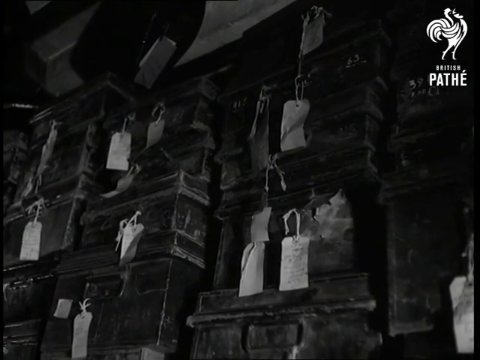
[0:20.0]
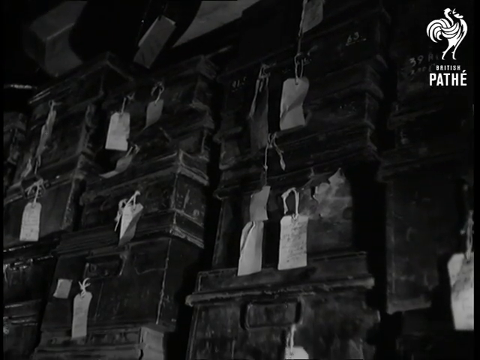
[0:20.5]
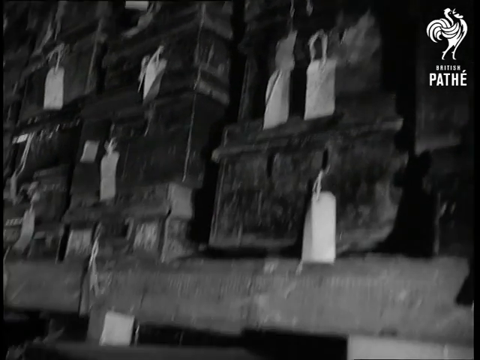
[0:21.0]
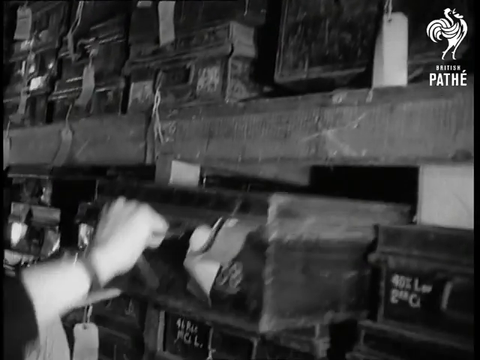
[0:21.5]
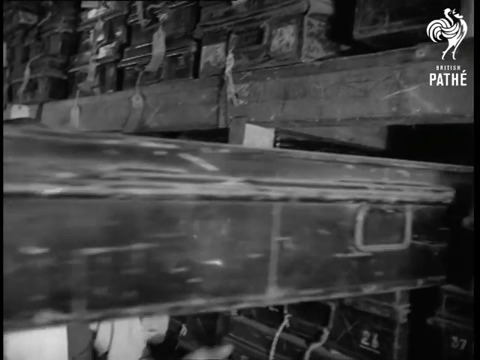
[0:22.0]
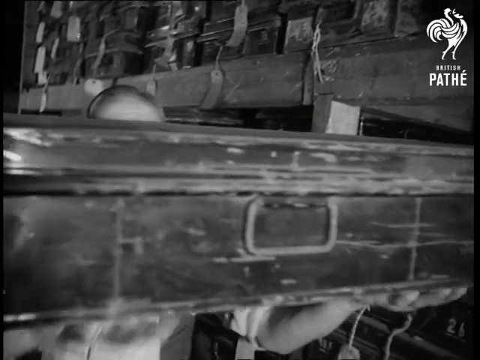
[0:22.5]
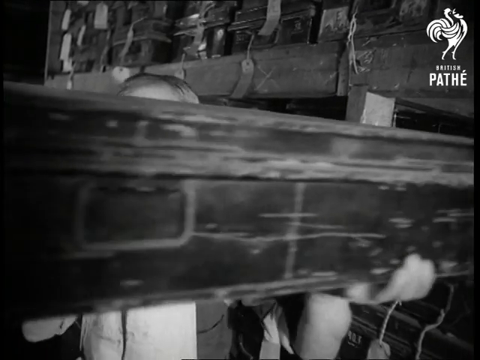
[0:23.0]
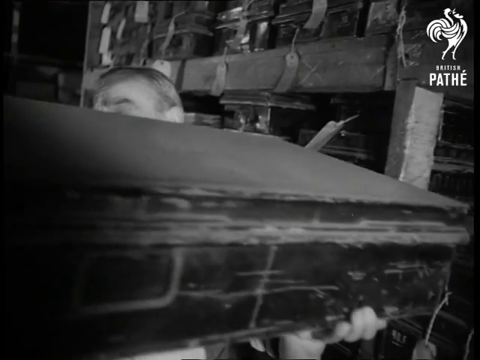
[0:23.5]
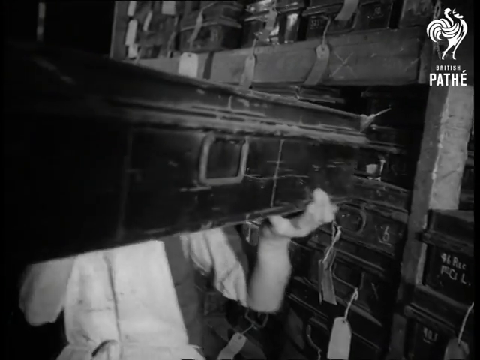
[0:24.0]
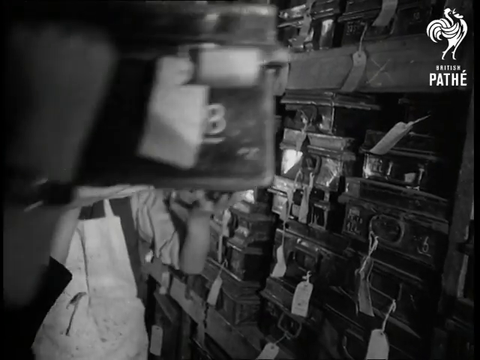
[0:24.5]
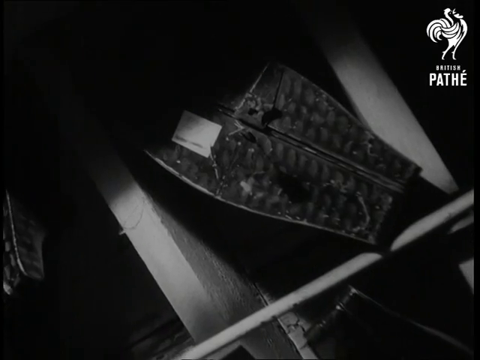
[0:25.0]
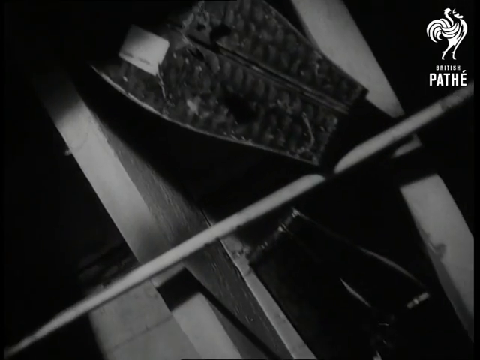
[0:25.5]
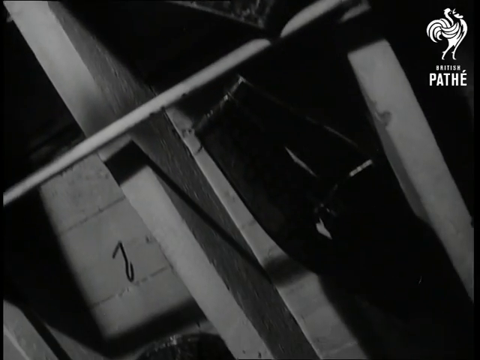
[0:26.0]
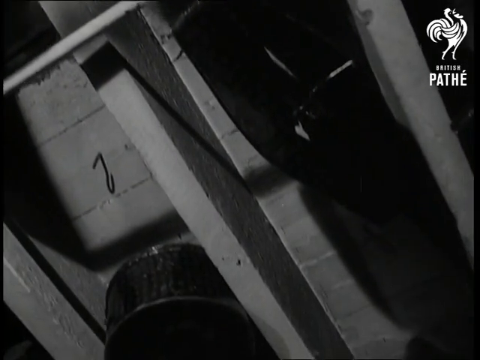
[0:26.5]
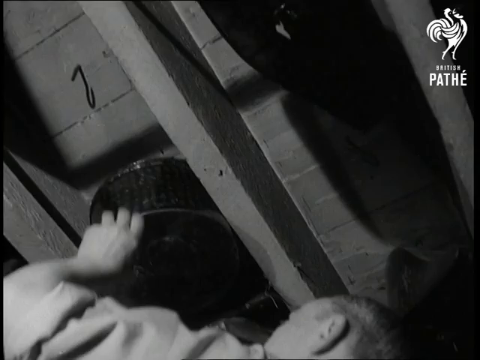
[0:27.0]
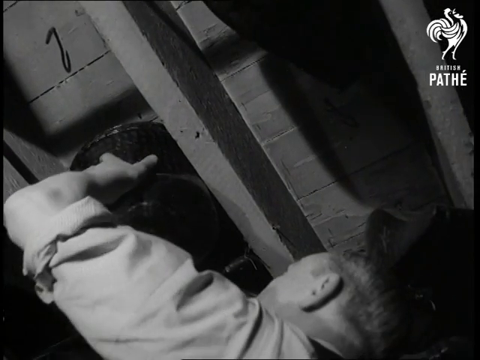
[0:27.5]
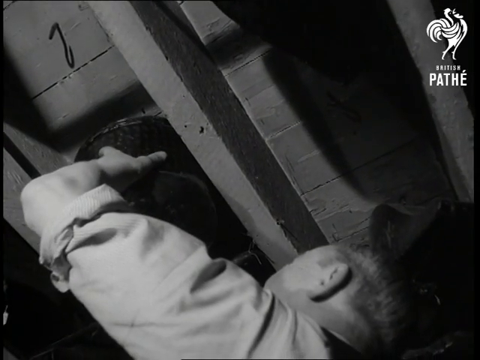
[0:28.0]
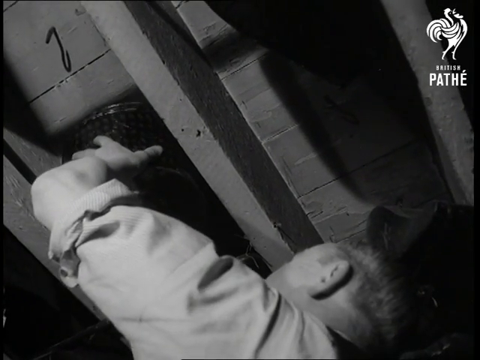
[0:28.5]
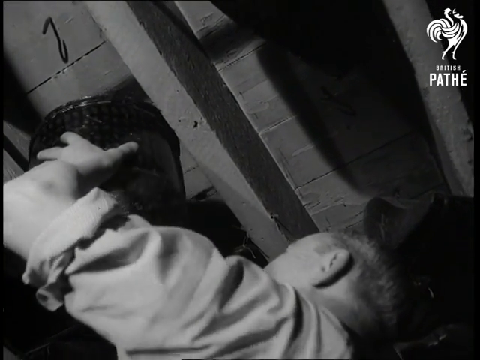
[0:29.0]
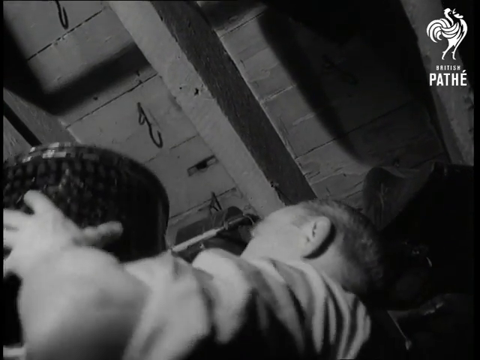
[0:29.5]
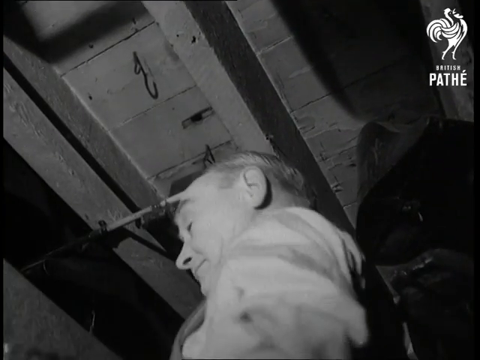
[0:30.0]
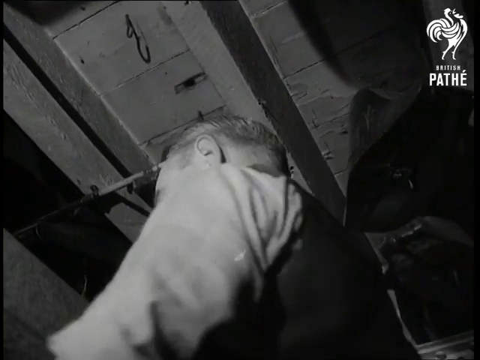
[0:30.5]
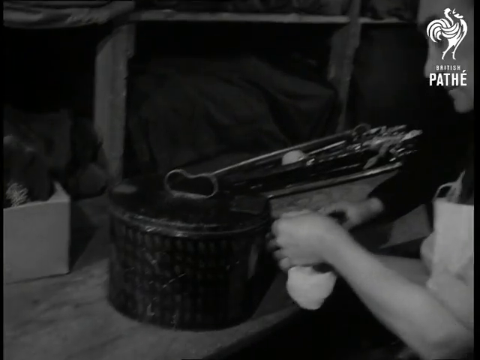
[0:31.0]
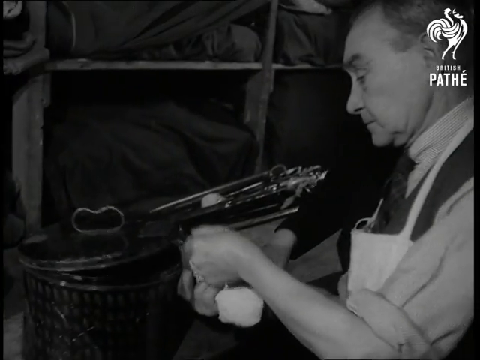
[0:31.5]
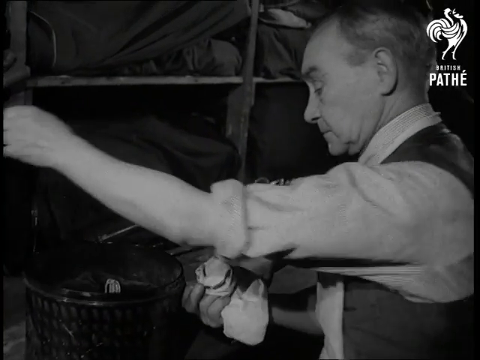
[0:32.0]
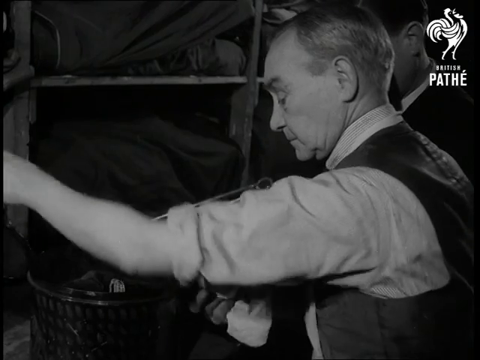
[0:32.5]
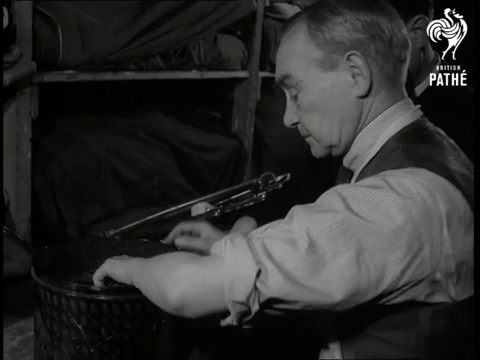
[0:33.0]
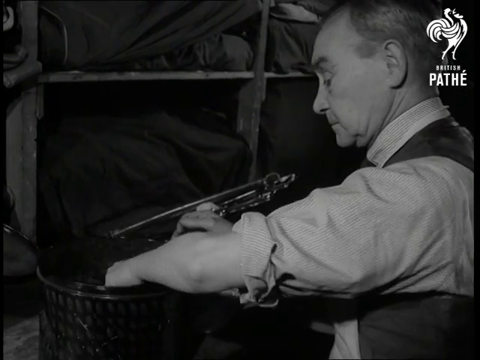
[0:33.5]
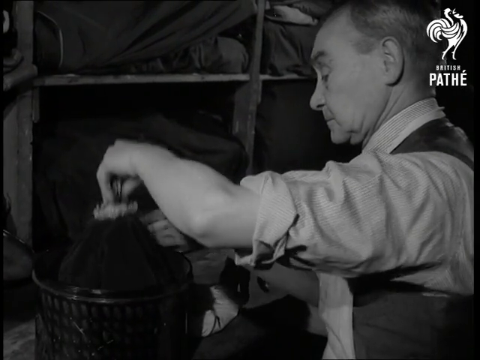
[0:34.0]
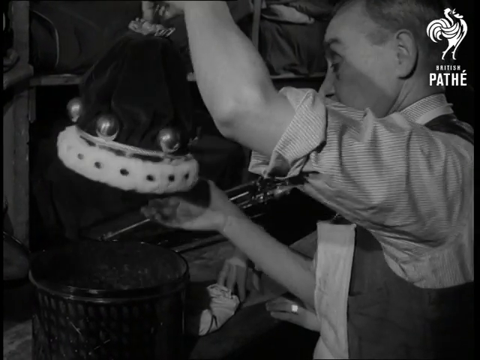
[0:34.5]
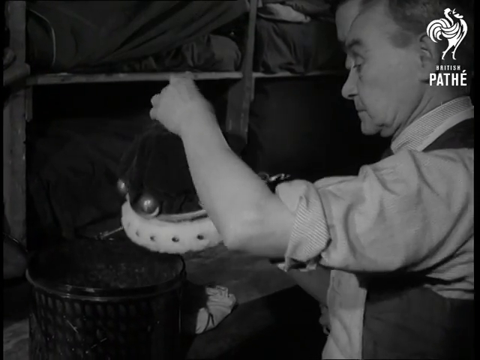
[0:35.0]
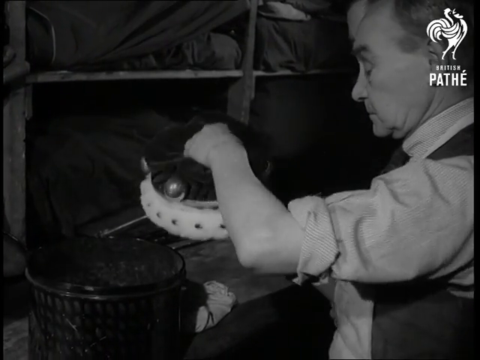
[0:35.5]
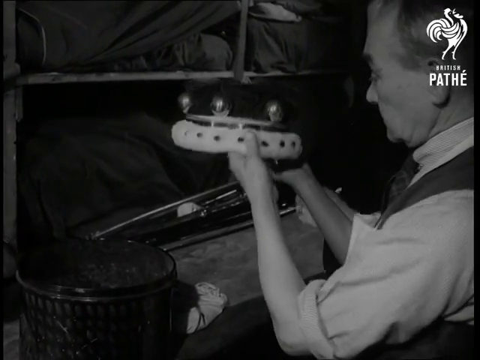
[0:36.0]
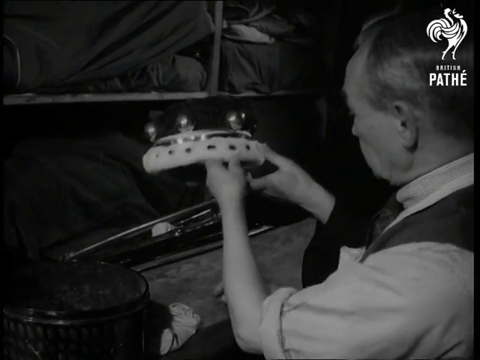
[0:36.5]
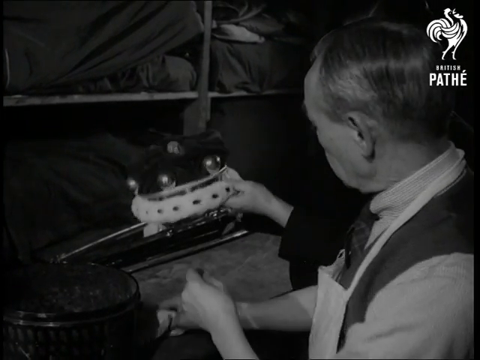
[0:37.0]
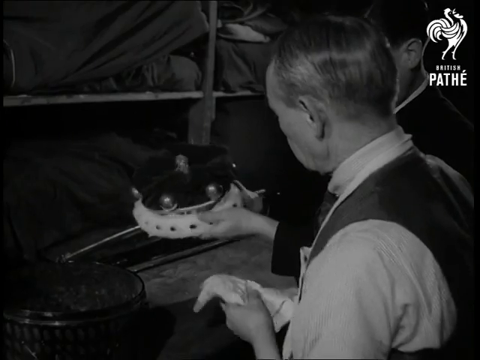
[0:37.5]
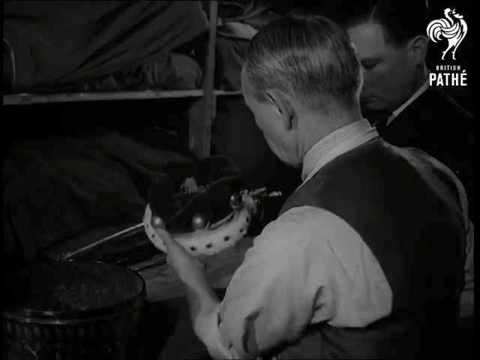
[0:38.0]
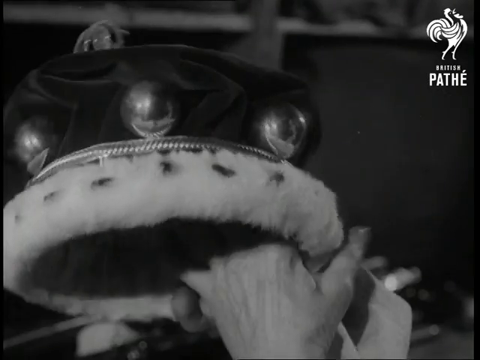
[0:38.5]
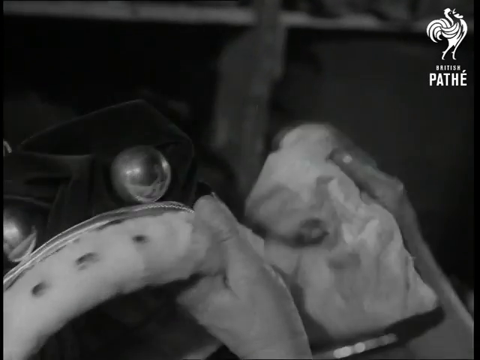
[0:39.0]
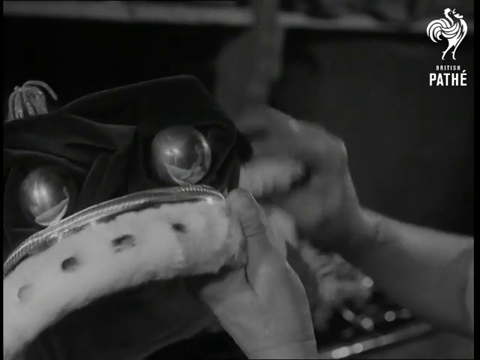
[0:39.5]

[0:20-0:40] The gentleman with the apron pulls out two cases, a longer rectangular case and a cylindrical case, and opens the cylindrical one. Inside is a crown, which he pulls out by the top. It appears to have a white circular rim with various jewels around it, possibly red, though the footage is black and white. He starts polishing the sides, which are either gold or perhaps silver. The scene suggests treasures or regal items are stored here.